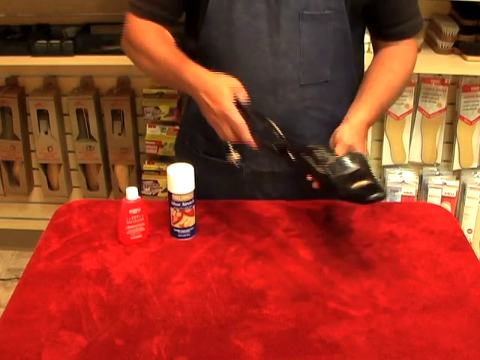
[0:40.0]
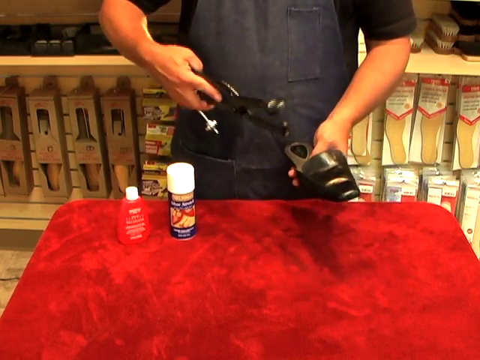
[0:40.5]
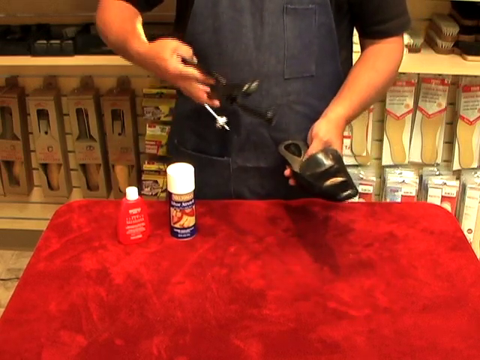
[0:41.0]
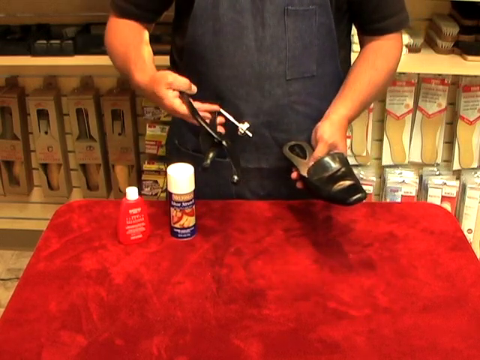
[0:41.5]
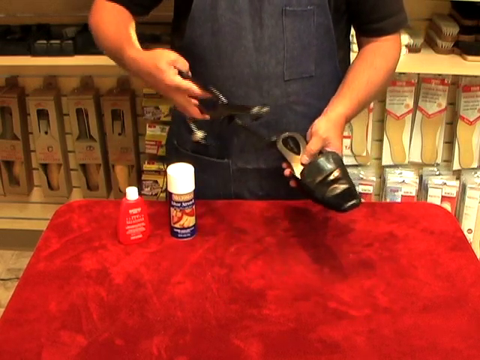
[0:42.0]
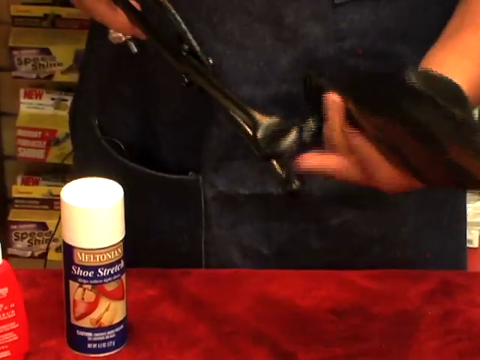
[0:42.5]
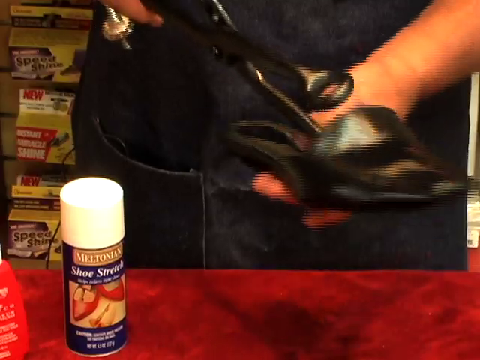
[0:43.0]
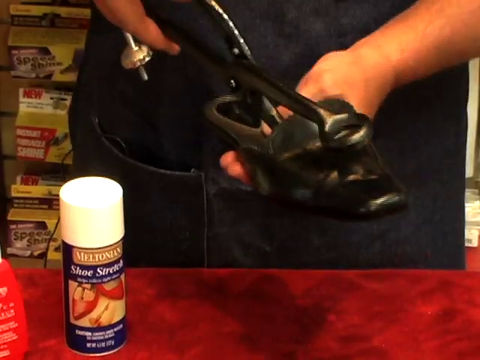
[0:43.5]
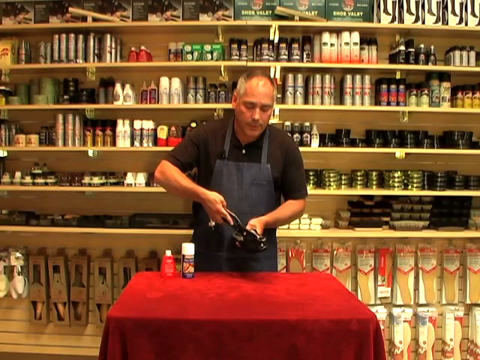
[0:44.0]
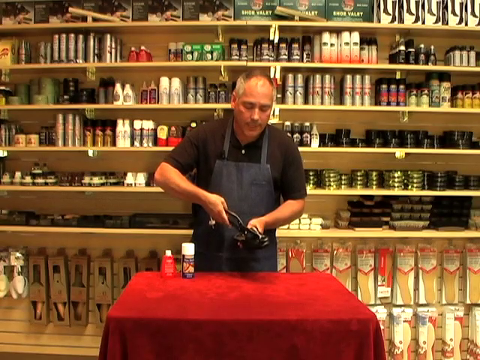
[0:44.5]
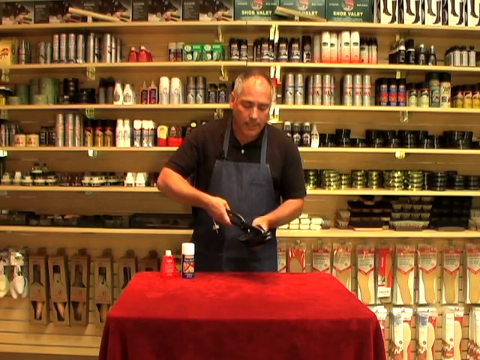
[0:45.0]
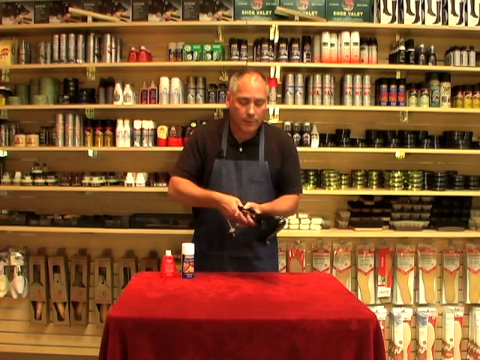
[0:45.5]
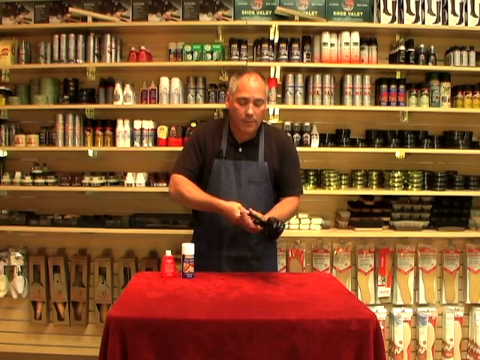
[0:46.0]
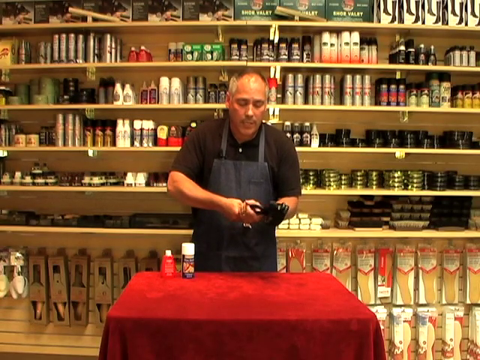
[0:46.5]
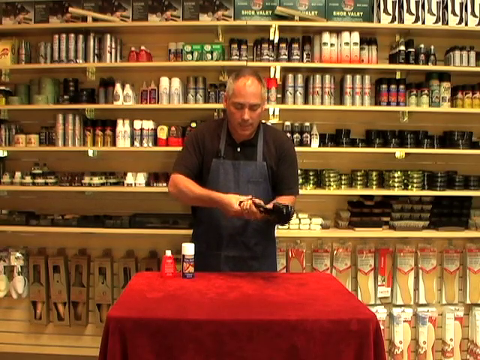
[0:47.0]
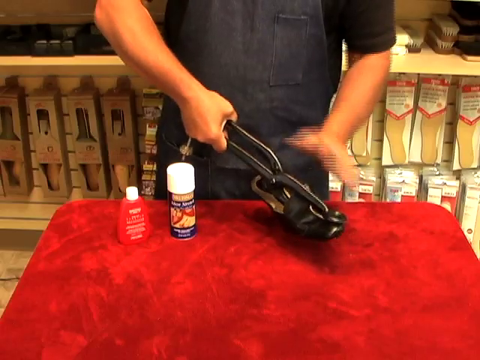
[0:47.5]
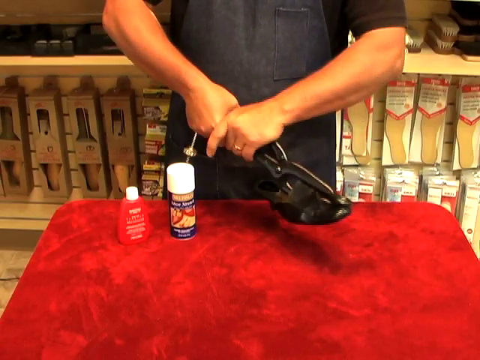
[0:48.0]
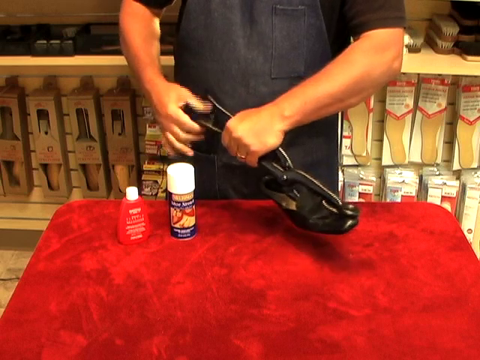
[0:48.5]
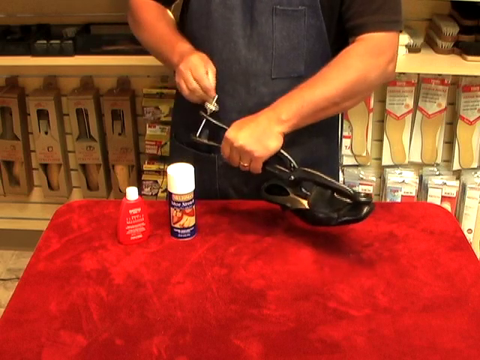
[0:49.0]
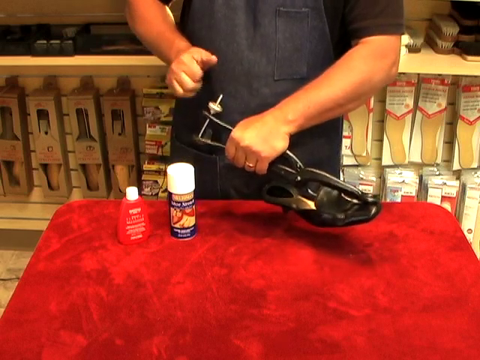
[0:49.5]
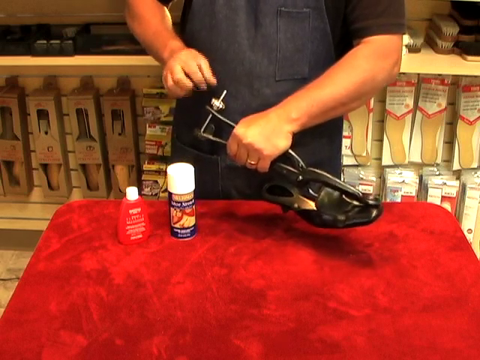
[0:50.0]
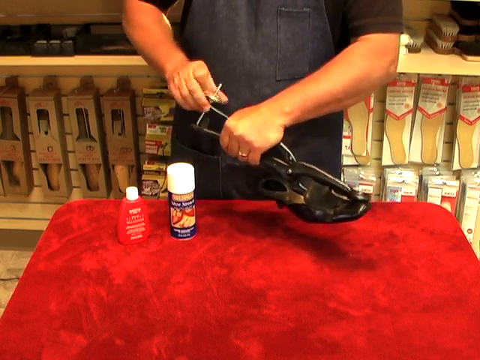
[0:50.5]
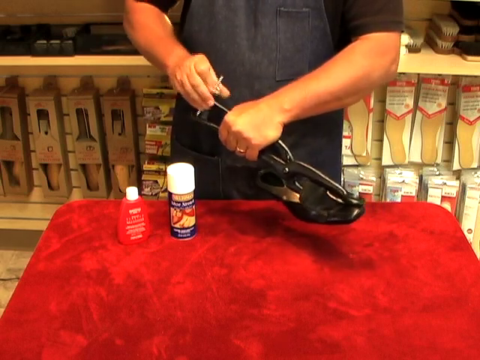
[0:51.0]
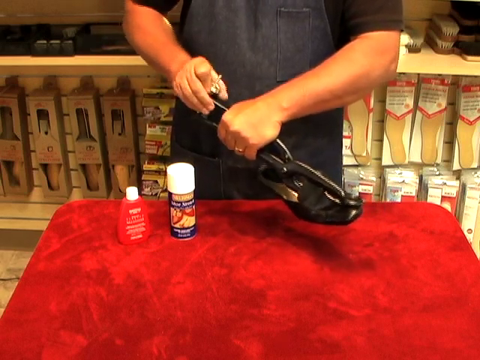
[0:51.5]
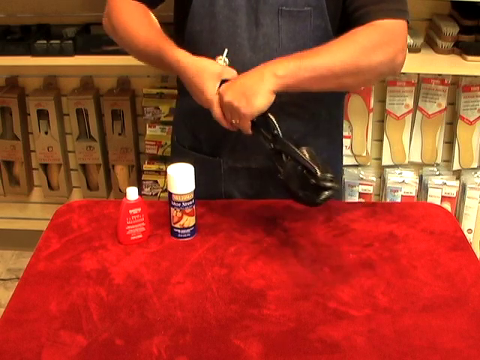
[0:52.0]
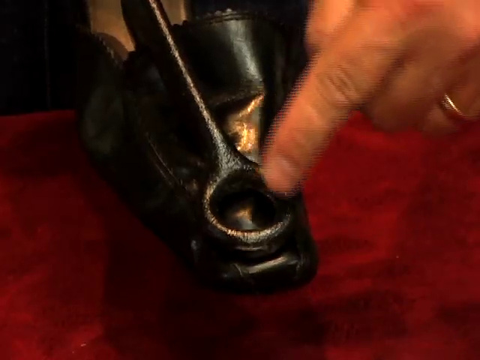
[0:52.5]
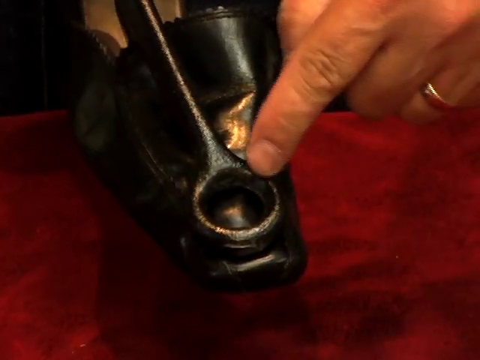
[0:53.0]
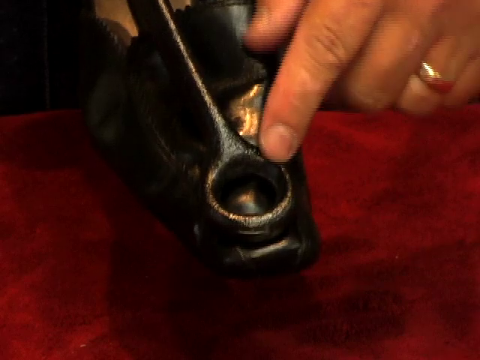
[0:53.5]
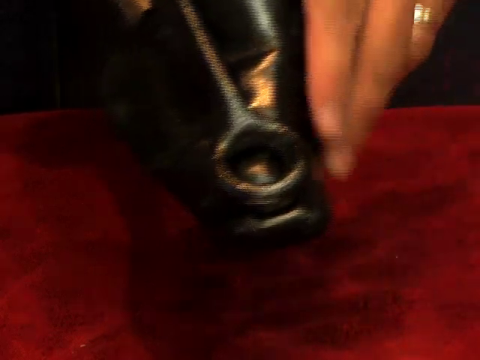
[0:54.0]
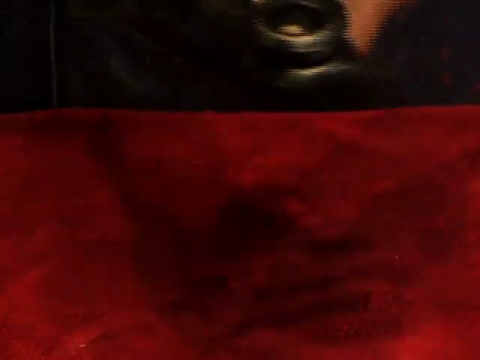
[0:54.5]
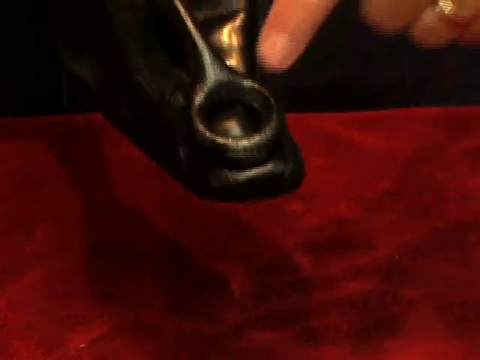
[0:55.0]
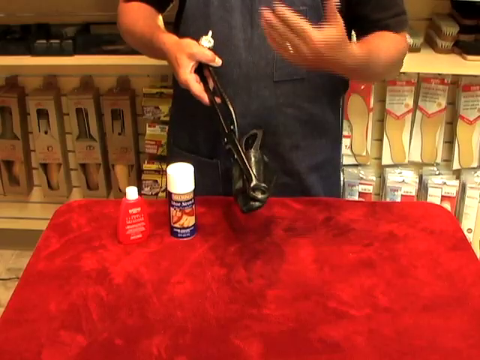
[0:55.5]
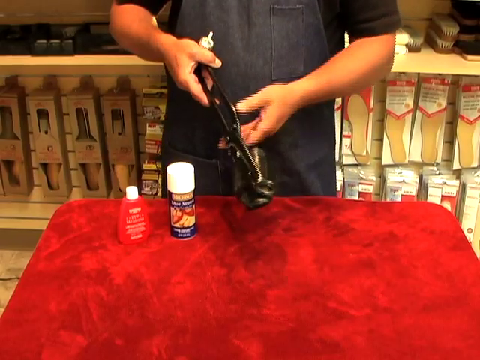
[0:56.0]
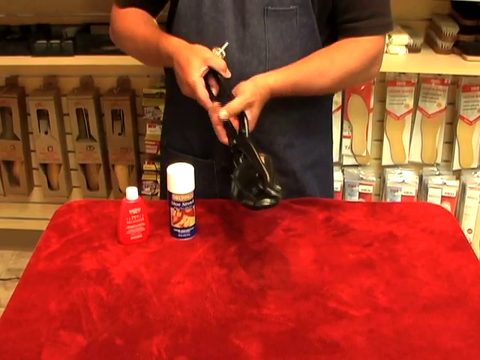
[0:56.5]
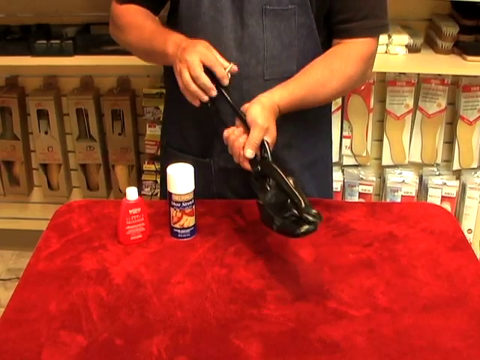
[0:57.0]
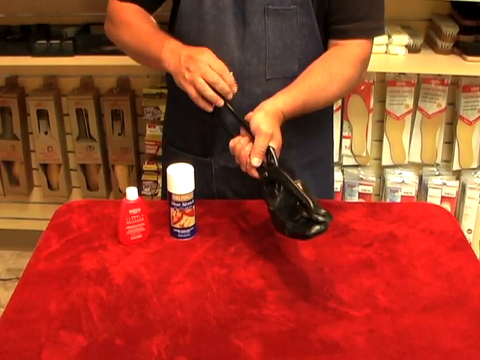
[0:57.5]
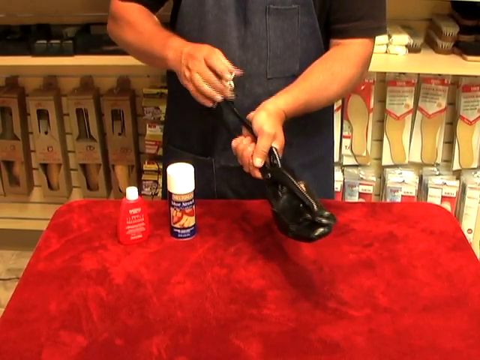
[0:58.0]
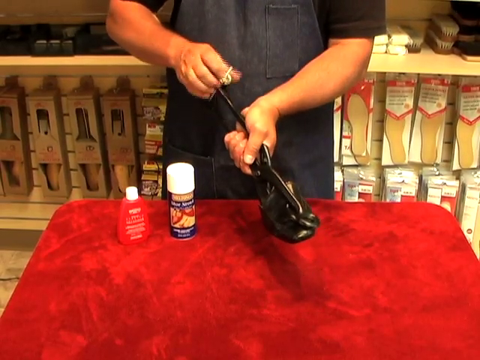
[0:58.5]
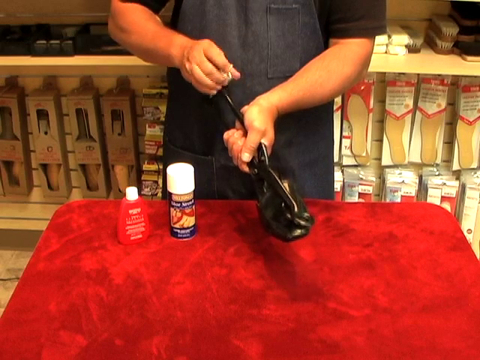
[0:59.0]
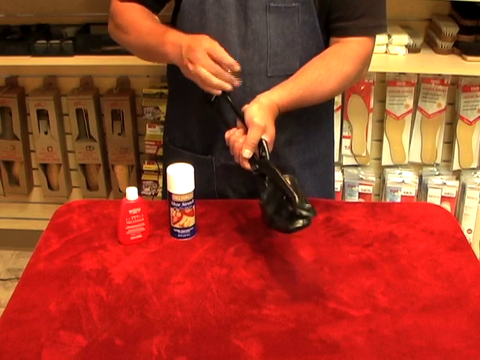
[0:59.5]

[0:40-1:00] The man holds a shoe in his hand and holds a type of black pliers in his right hand. Using his right hand and the pliers, he works the black shoe held in his left hand, applying pressure to align it, like a maker. Some black grains fall onto the table as he works the shoe with the pliers while explaining something. The camera then zooms in to the shoe, showing the details of him making it. The man wears a black apron and a black shirt. On top of the table is a container with "shoe strength" written on it. In the background are many containers in different colors, arranged according to type.